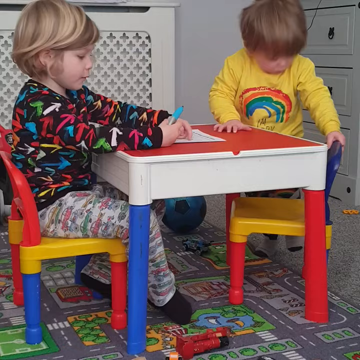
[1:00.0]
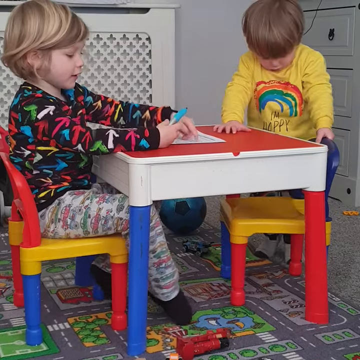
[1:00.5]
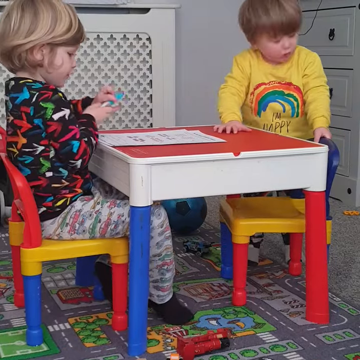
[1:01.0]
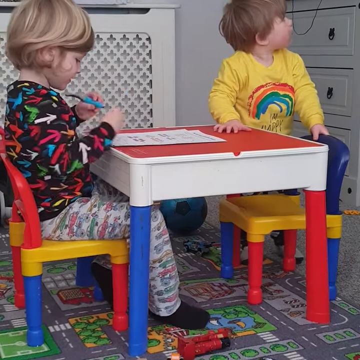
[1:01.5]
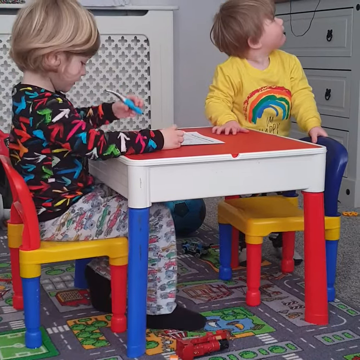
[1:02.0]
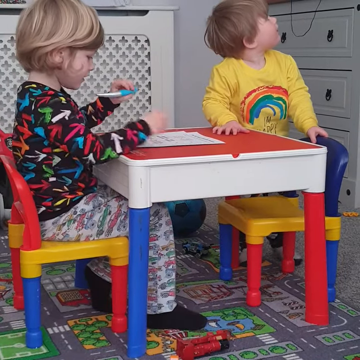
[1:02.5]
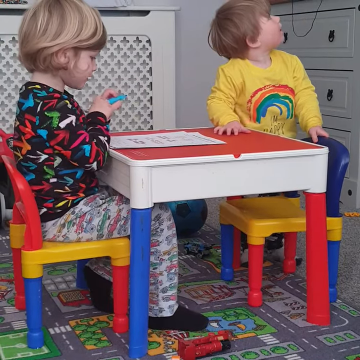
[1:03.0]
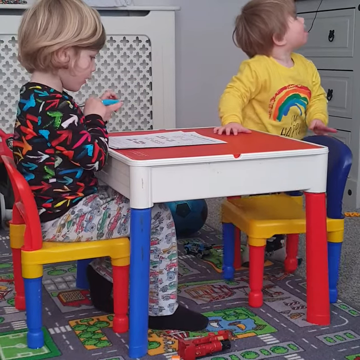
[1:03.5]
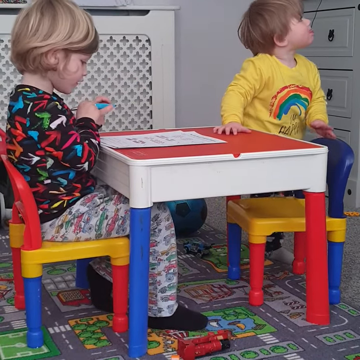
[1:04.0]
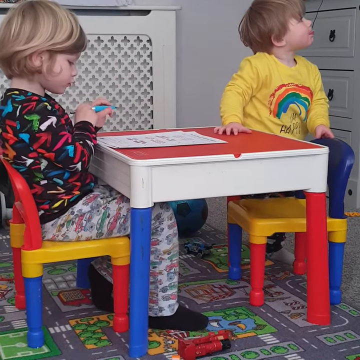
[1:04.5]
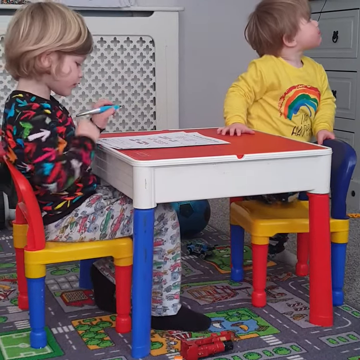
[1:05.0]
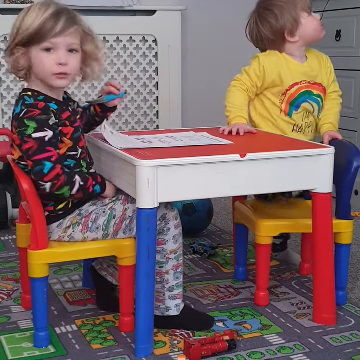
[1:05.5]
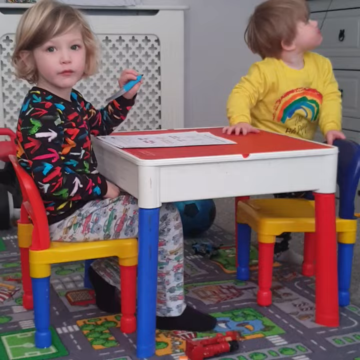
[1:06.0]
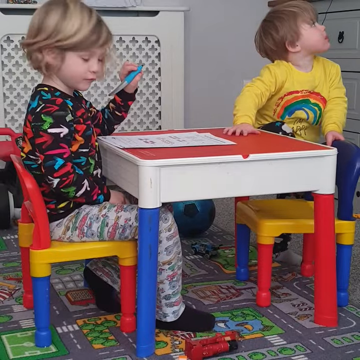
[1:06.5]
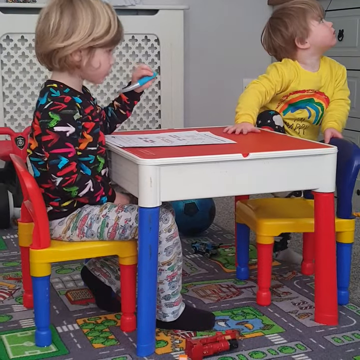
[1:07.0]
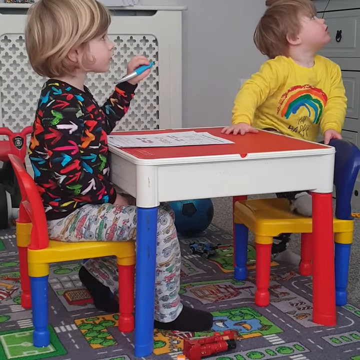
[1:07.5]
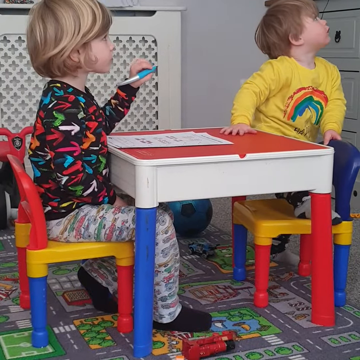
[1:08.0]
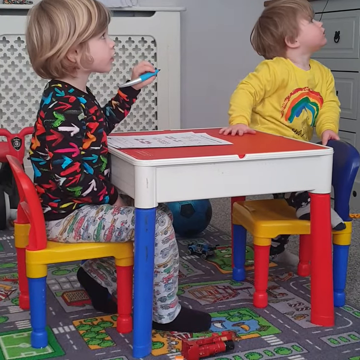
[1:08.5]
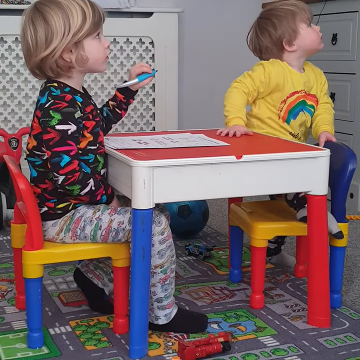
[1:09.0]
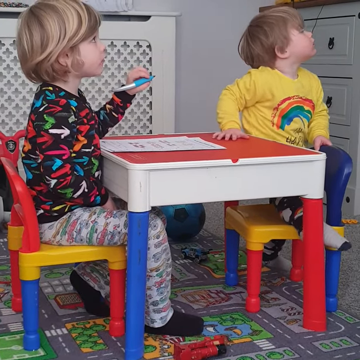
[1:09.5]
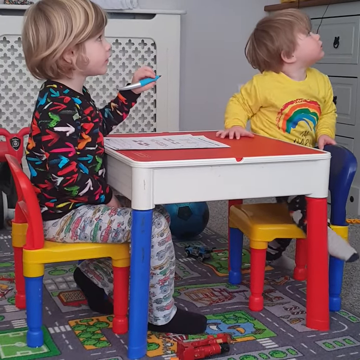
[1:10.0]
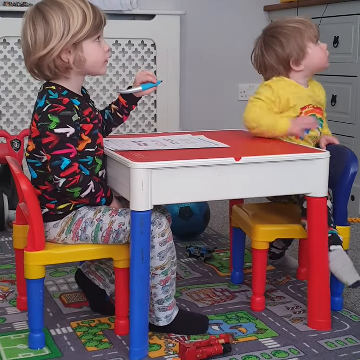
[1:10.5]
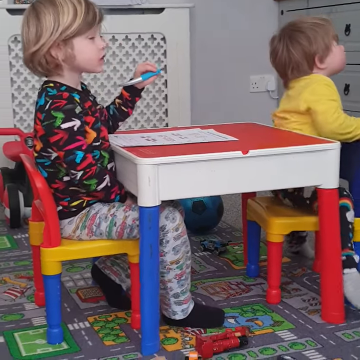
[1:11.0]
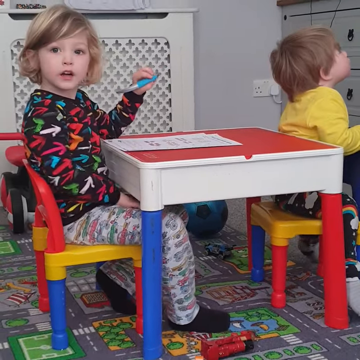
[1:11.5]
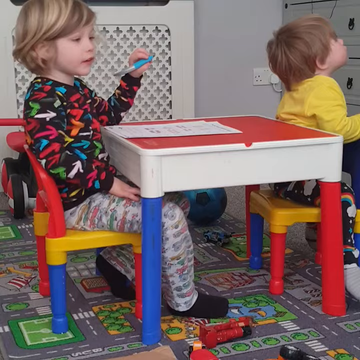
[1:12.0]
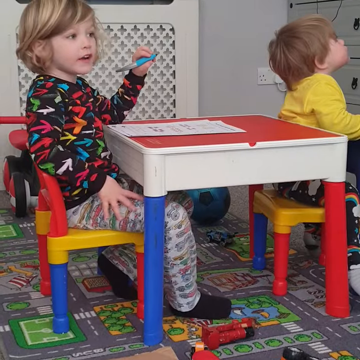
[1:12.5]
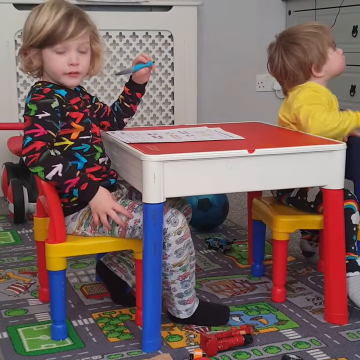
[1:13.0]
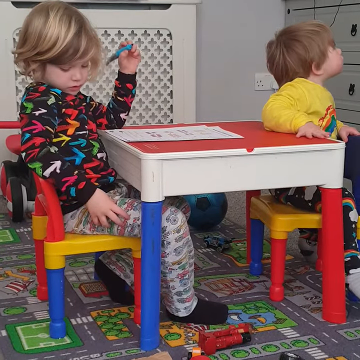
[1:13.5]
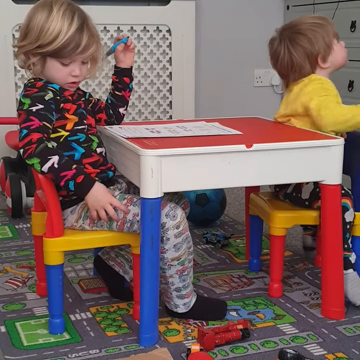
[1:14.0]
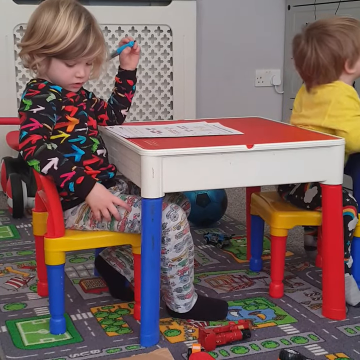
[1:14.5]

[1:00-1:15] The older child is still sitting at the table, holding the writing utensil in his left hand. He briefly looks up at the wall, perhaps at a TV screen of some sort, and then looks back at the person recording. Meanwhile, the younger child has one hand on the chair and one hand on the table and tries to get back into the chair while looking up at some type of screen or person. He slides his right leg onto the chair and sits down backwards, with the back of the chair against his stomach. His full attention is now on something out of frame, perhaps a TV or a person.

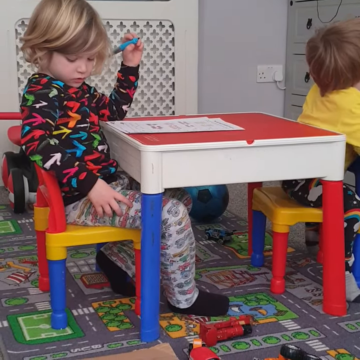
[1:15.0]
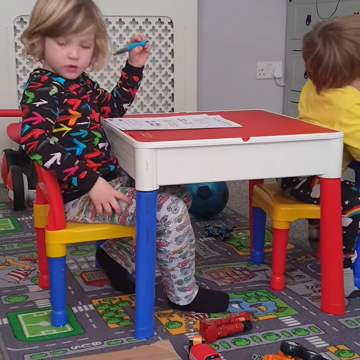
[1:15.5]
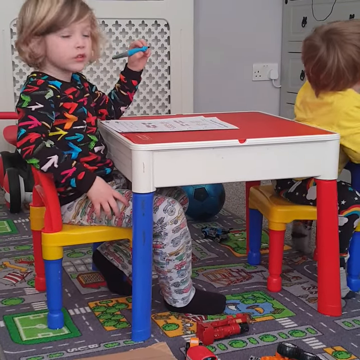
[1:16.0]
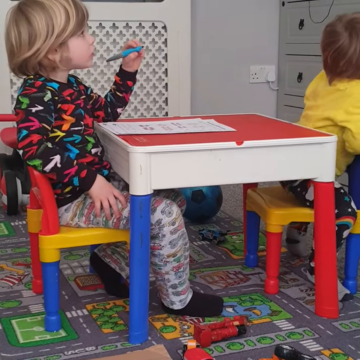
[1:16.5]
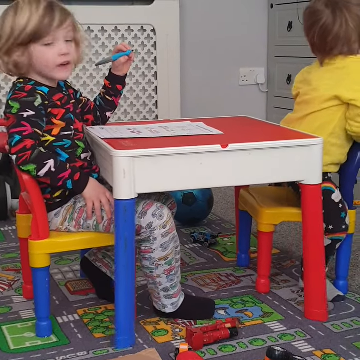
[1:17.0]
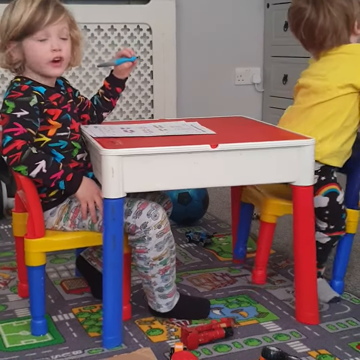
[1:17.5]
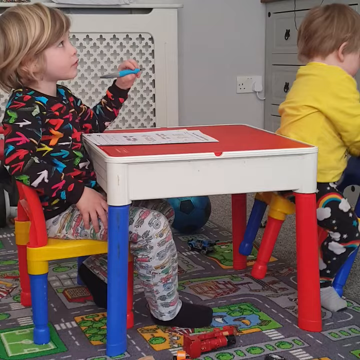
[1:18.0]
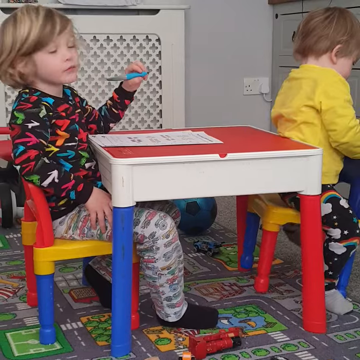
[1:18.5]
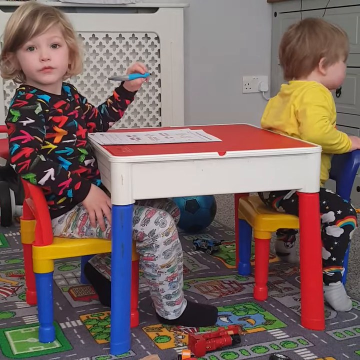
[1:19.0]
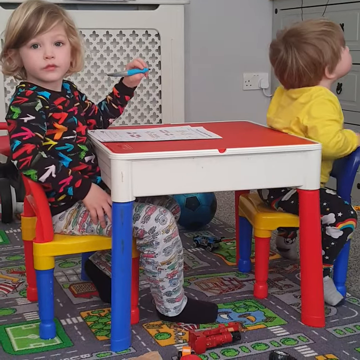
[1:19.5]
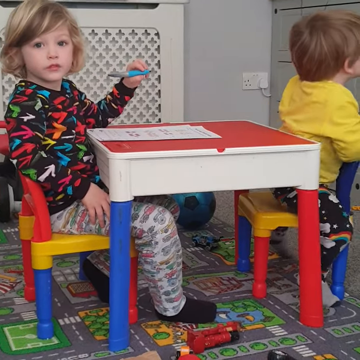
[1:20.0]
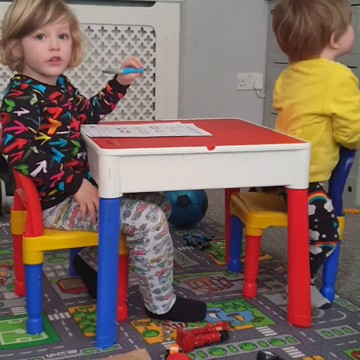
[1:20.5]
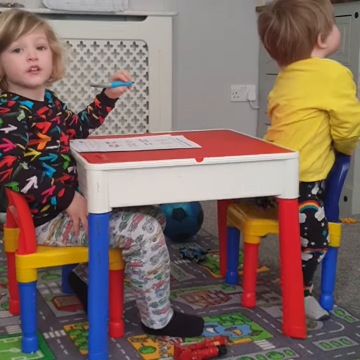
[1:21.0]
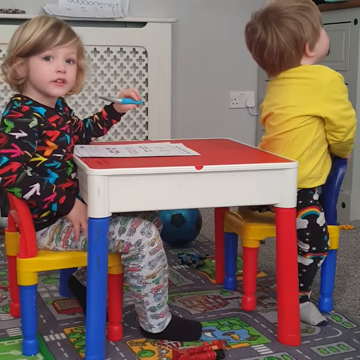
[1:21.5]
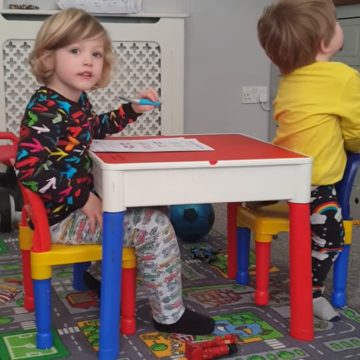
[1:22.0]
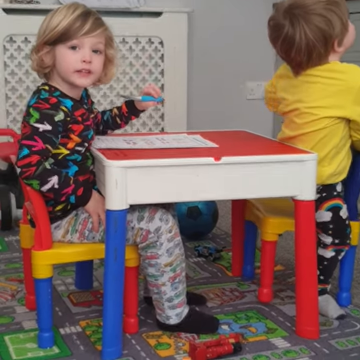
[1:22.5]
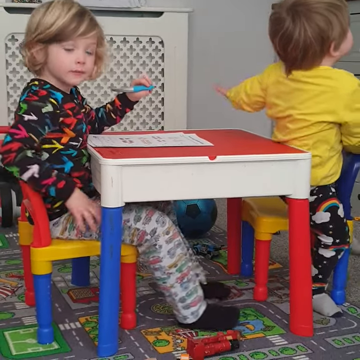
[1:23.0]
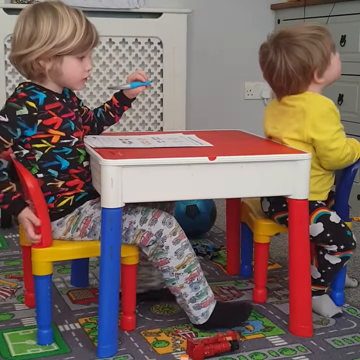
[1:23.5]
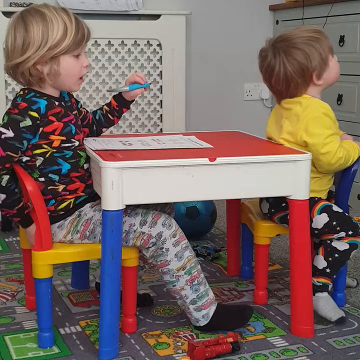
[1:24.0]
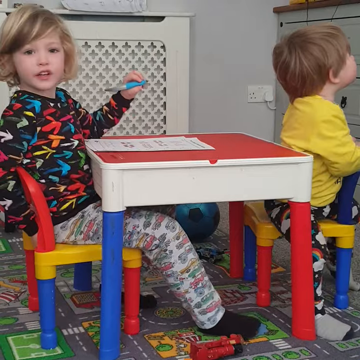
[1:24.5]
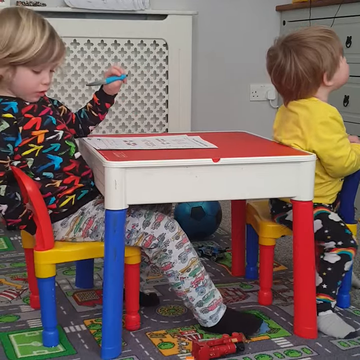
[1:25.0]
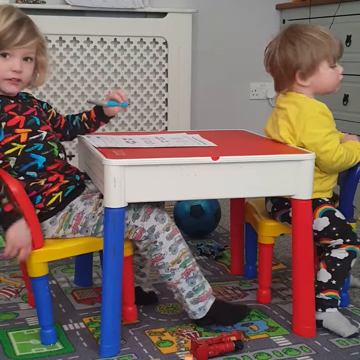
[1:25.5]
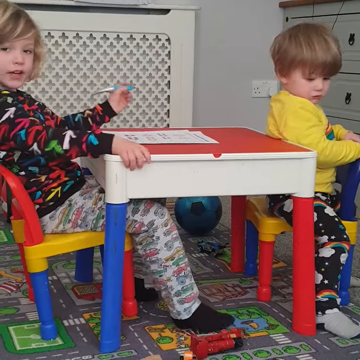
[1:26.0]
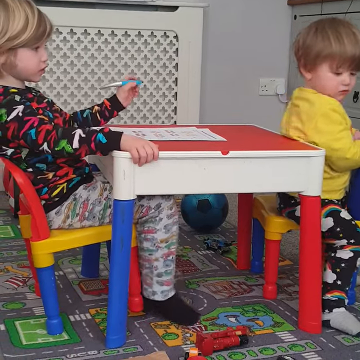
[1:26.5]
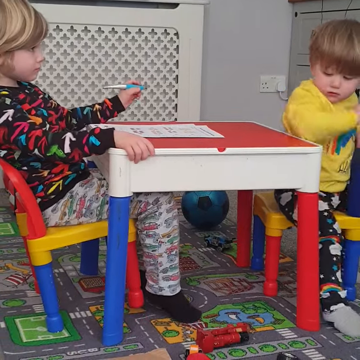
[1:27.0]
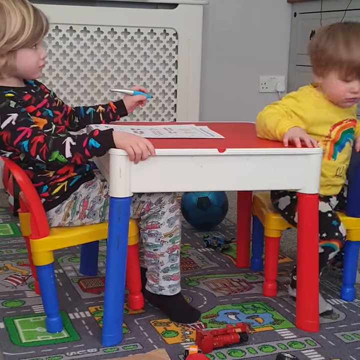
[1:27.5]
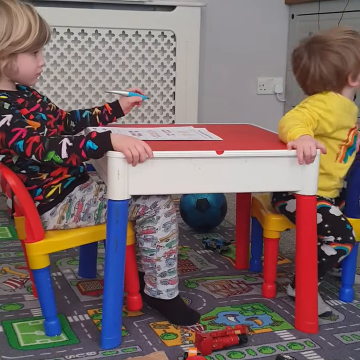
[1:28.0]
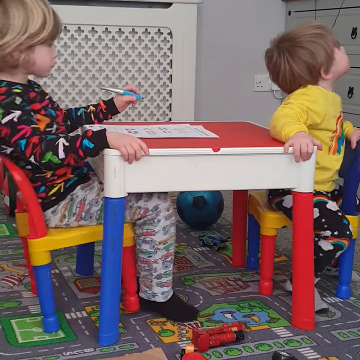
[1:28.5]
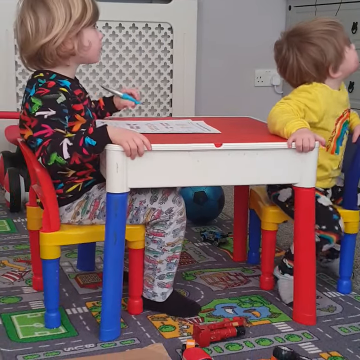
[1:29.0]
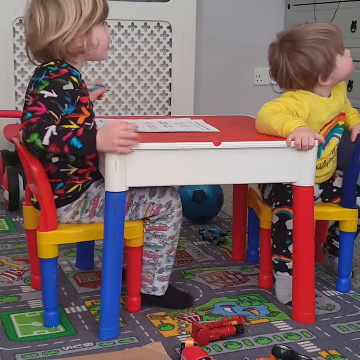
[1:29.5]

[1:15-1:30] The younger child is fully absorbed in whatever he is looking at, still sitting backwards and fidgeting to get comfortable: leaning forward, going back, standing a little, sitting, wiggling in the chair, and using the table as a support. Meanwhile, the older child looks at the adult making the video, says a few words, and looks back at the younger child. The older child leans back slightly in the chair without falling, and adjusts the table a bit on his end.